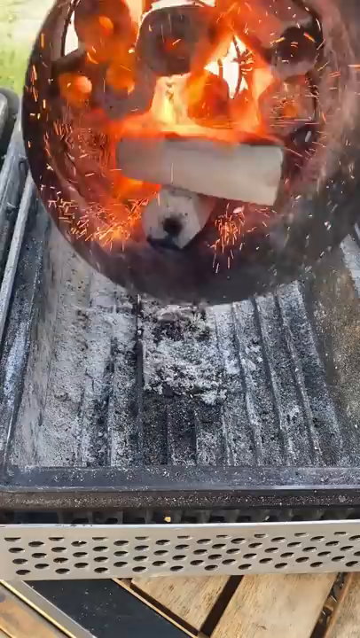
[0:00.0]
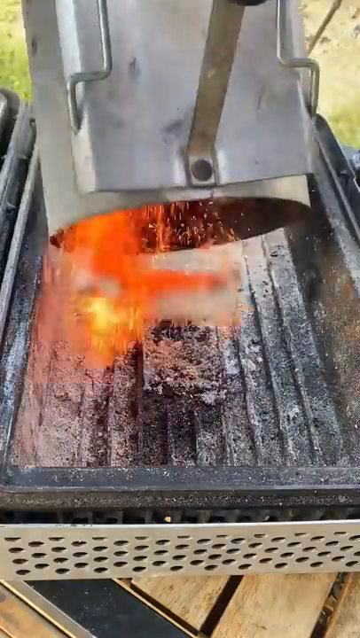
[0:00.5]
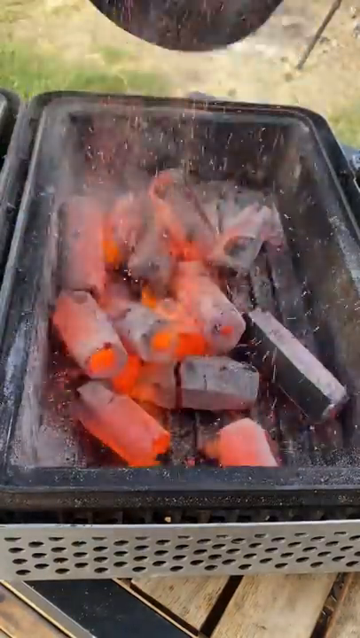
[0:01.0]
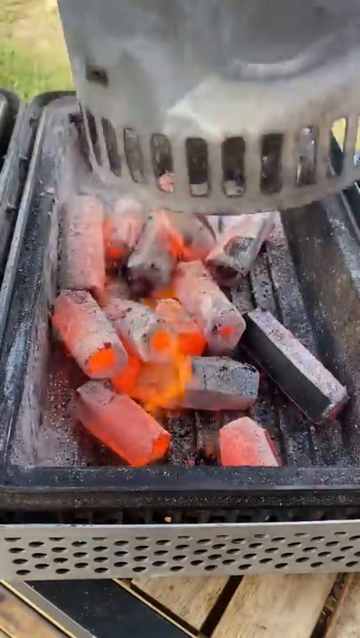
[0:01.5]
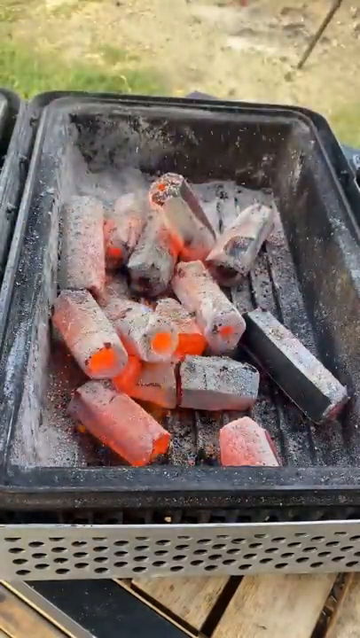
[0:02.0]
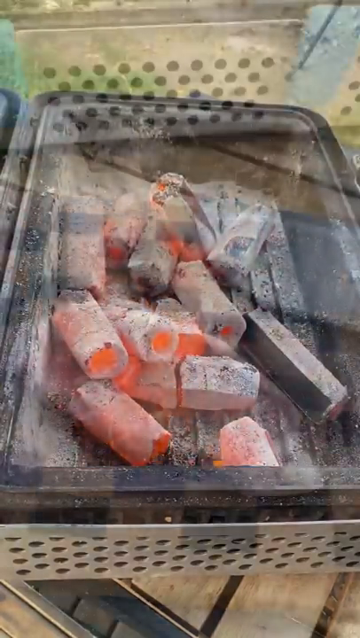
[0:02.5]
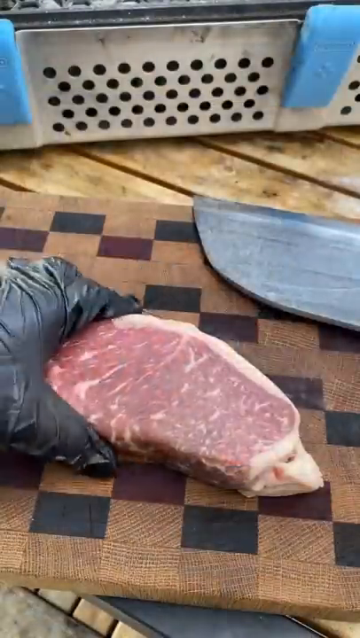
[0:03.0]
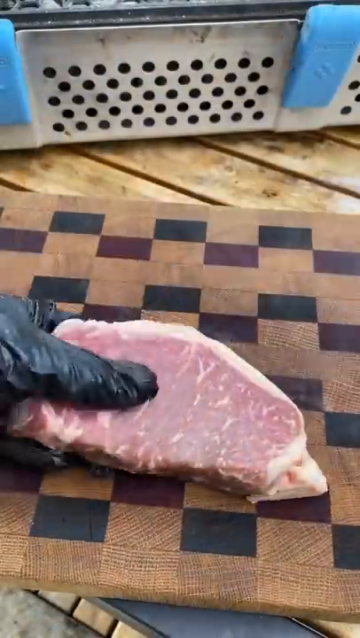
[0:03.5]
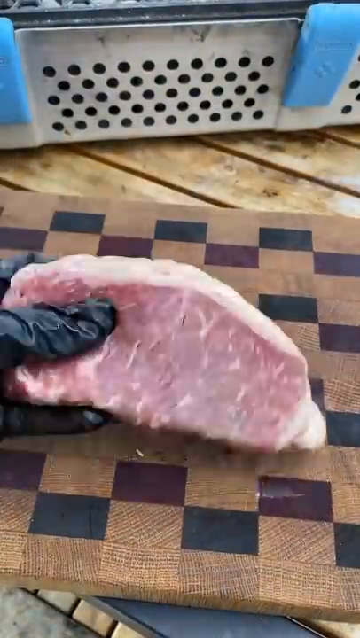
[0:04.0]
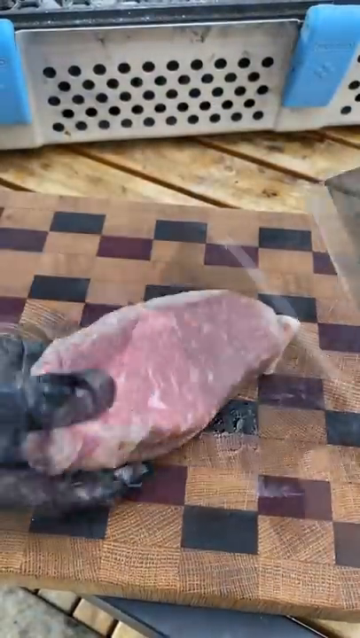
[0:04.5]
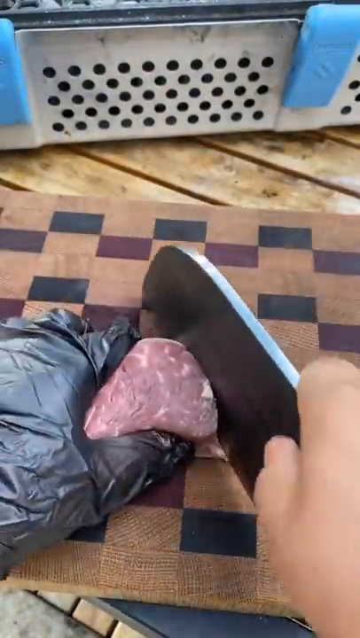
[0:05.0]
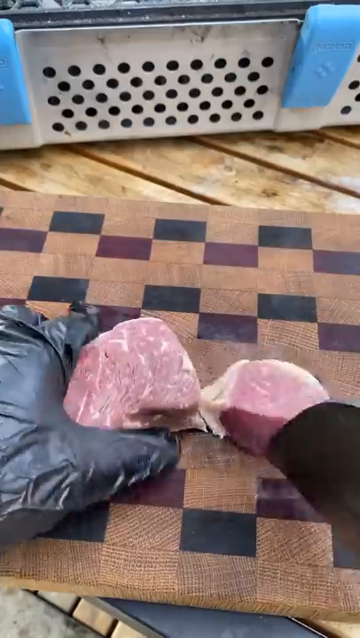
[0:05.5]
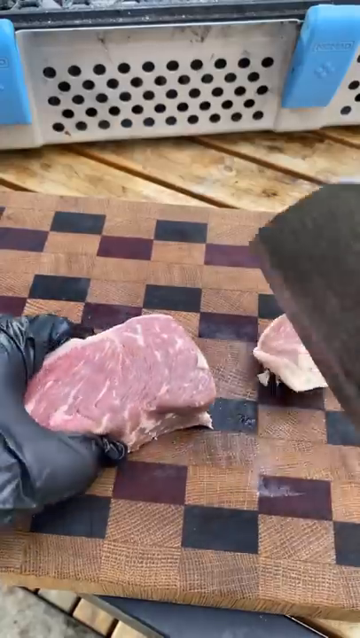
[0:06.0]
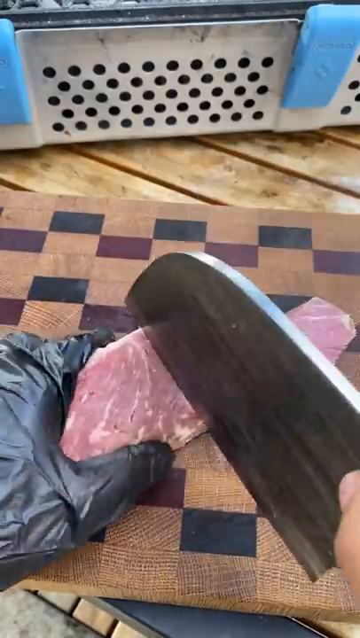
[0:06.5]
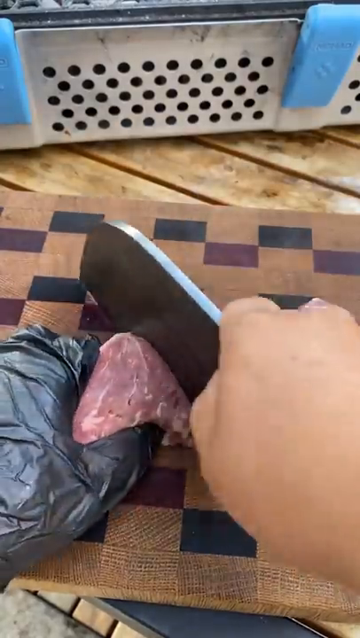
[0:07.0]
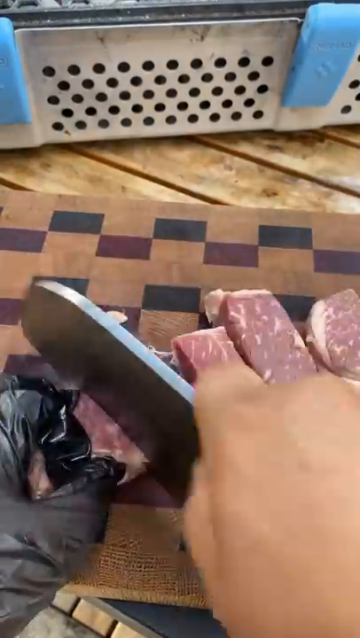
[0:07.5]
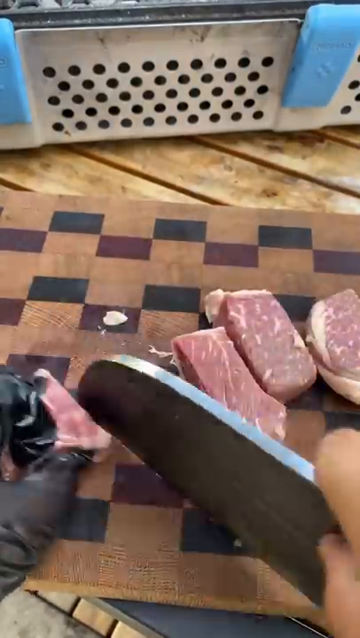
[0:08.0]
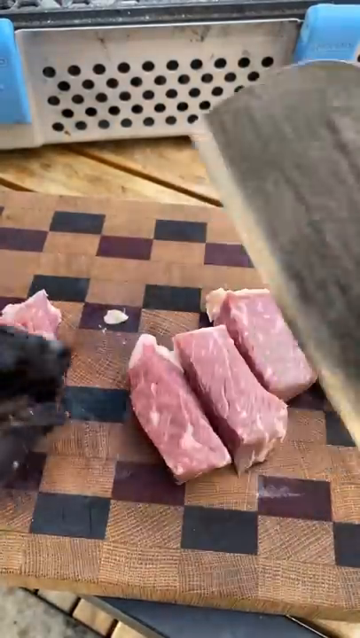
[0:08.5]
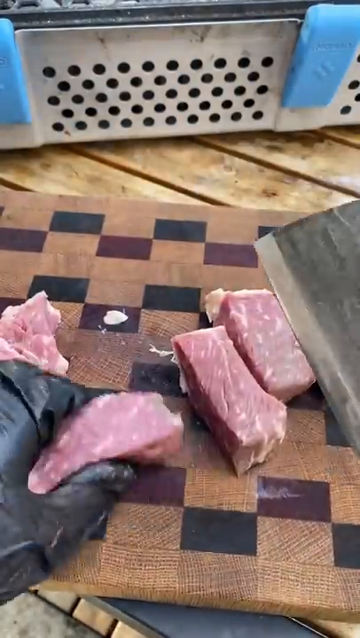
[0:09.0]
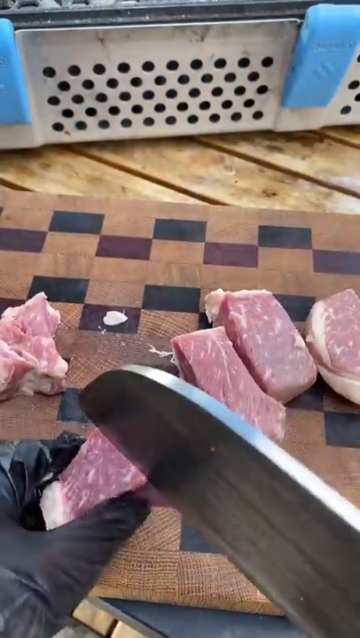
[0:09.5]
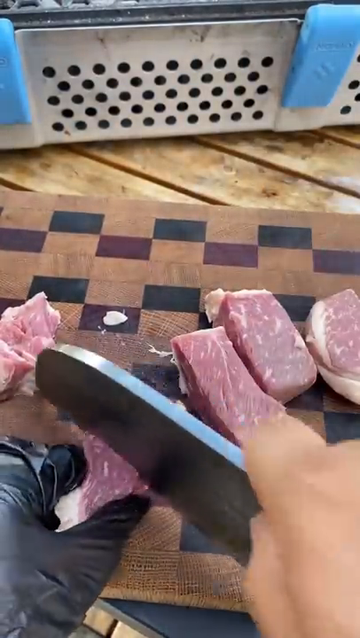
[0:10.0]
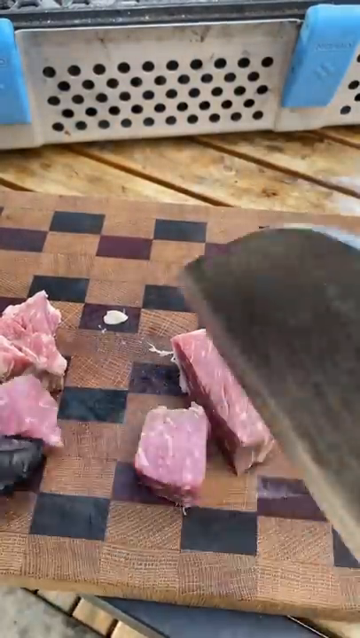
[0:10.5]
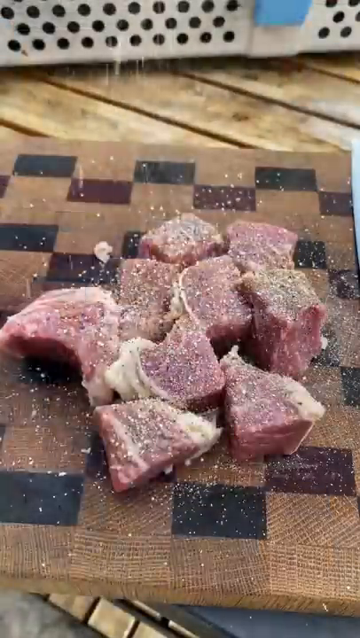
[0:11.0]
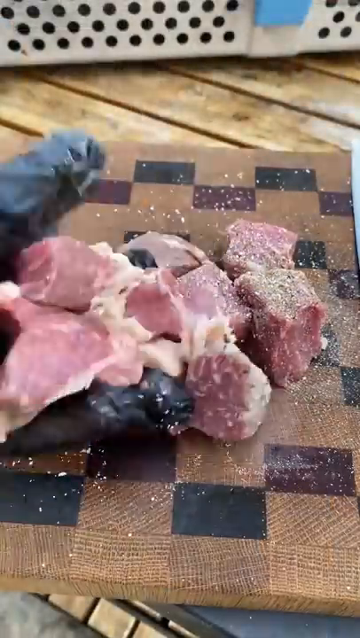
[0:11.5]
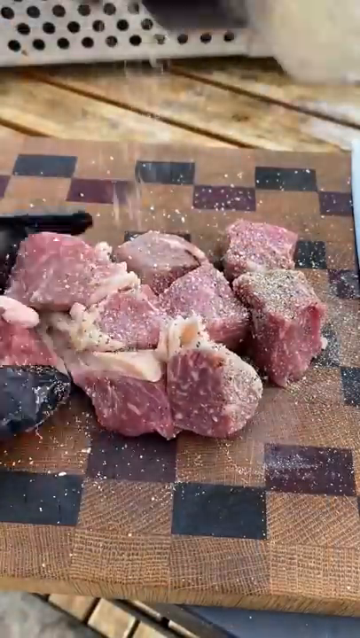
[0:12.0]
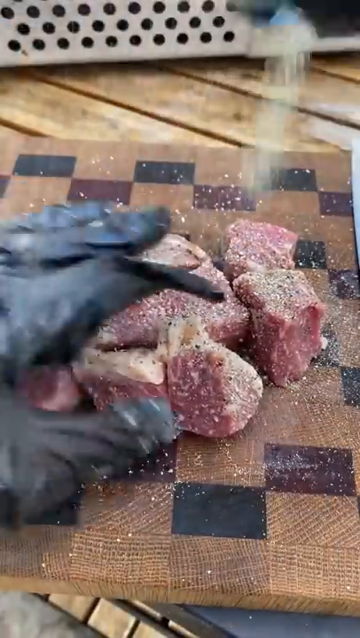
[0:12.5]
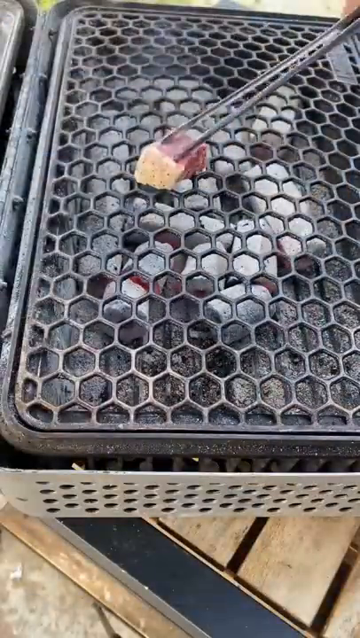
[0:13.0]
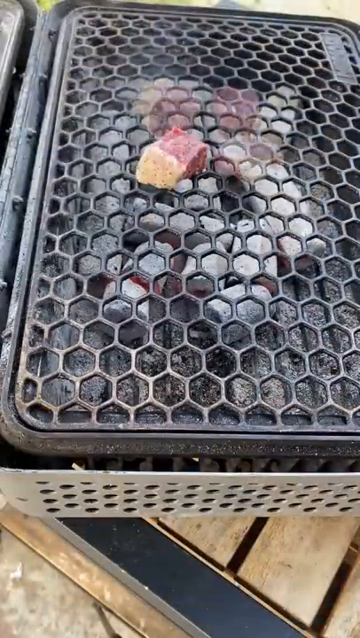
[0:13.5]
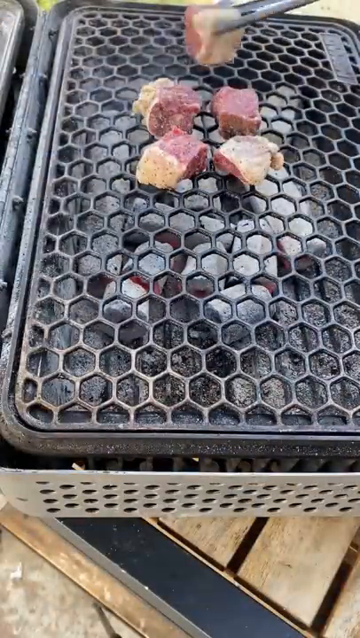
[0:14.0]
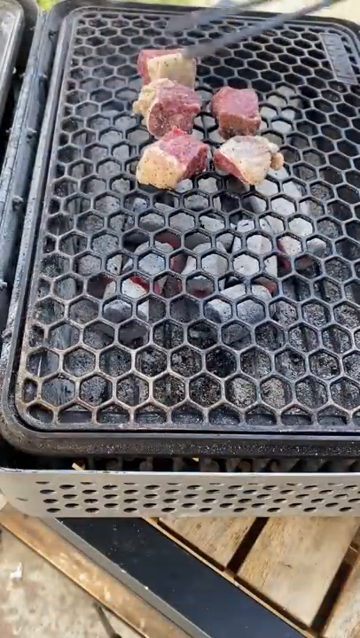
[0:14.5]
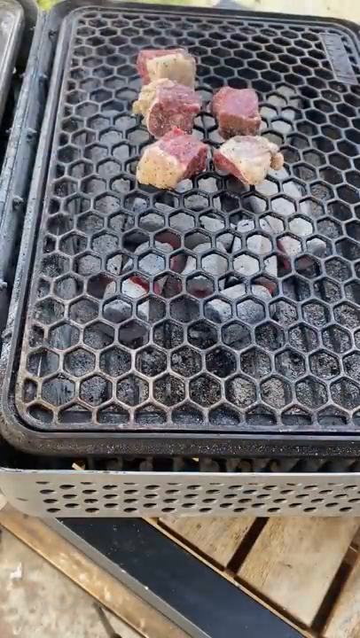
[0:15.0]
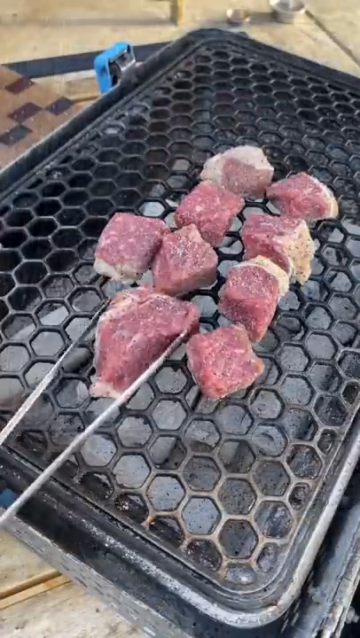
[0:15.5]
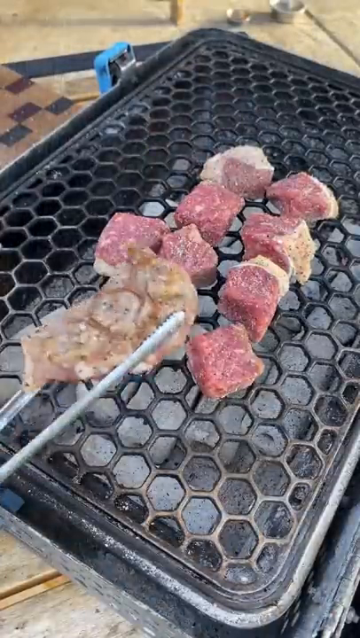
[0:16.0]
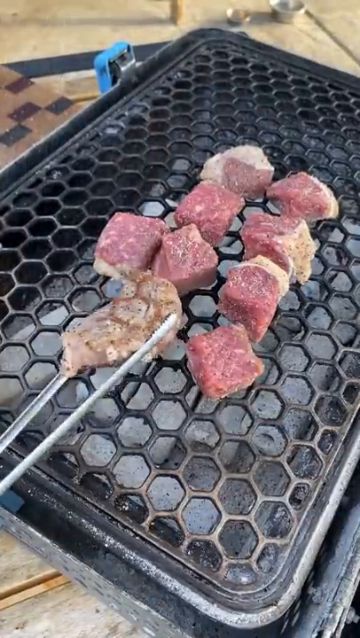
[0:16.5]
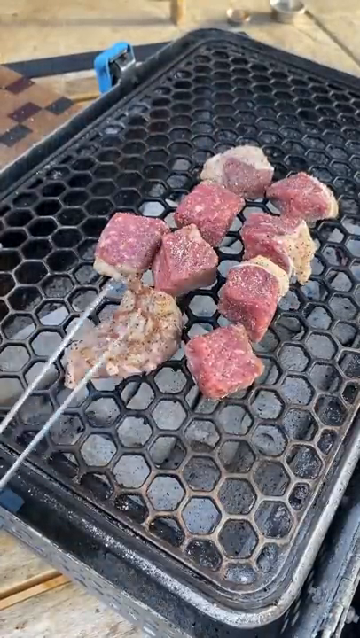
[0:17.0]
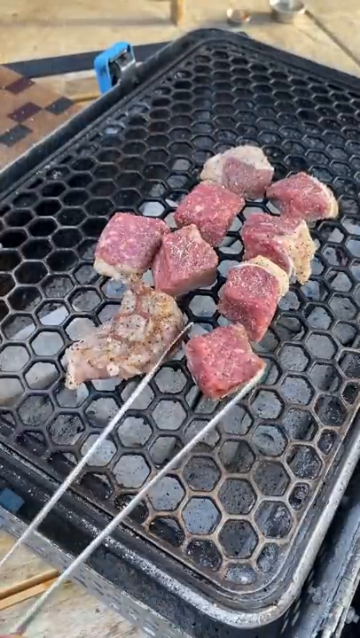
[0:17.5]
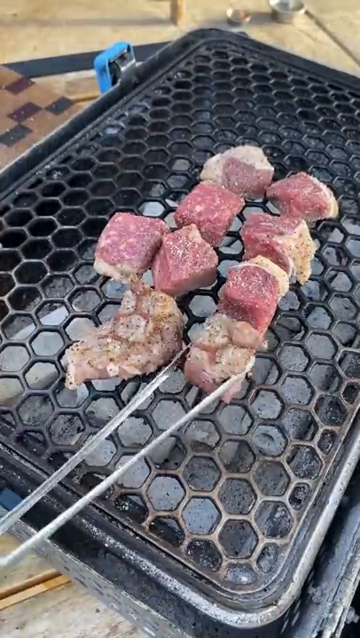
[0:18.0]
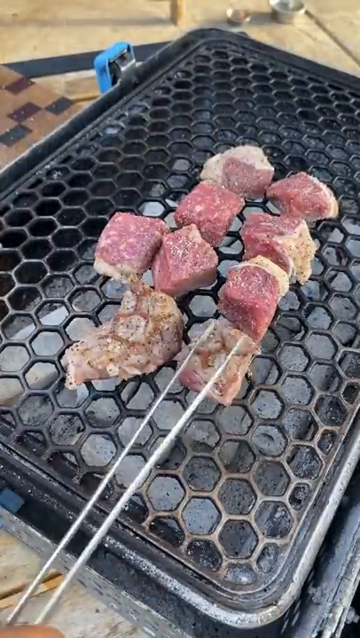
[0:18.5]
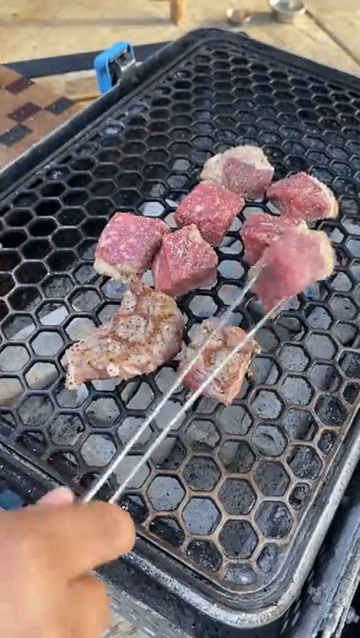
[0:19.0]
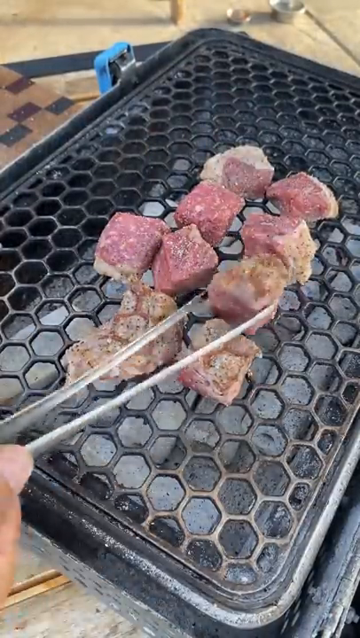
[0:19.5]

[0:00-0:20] The title begins "garlic steak tips and eggs on the Nomad"; the rest of it cannot be read. The video is by Miguel's cooking with fire and is probably outdoor-style cooking. A man heats up a bunch of coal and puts it in a black metal container. He has what looks like a ribeye steak, judging by the fat; it is decently sized. He uses a really big, really thick knife. The cutting board has a crisscross pattern like a chessboard and looks like a charcuterie board. He cuts the steak into big chunks first and then smaller chunks, seasons it with dried parsley or a dried seasoning combination, and puts it on the grill, then flips the pieces. The charcoal grill has a hexagonal pattern that presses onto the steak pieces.